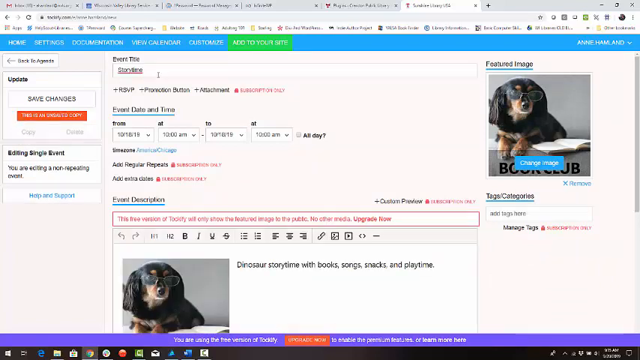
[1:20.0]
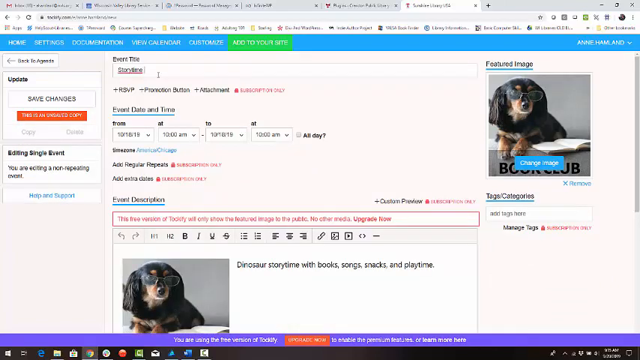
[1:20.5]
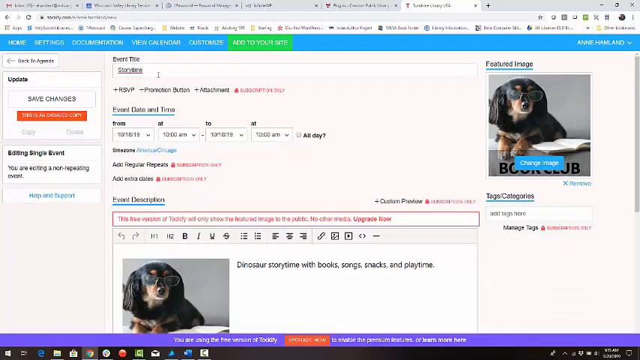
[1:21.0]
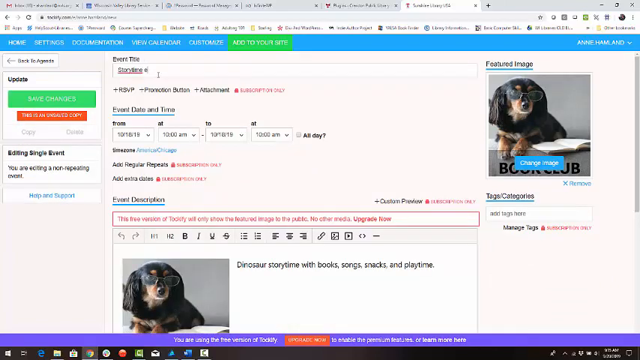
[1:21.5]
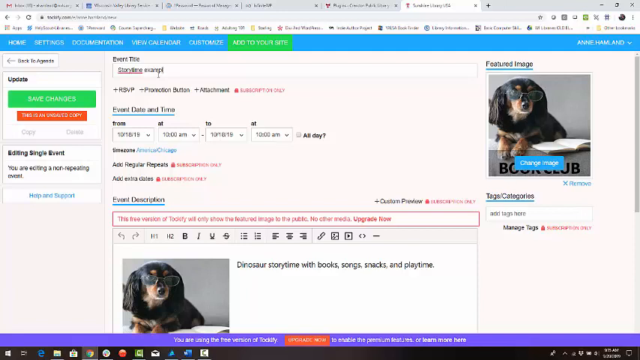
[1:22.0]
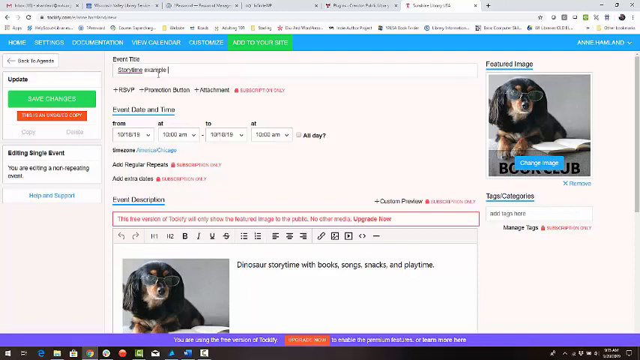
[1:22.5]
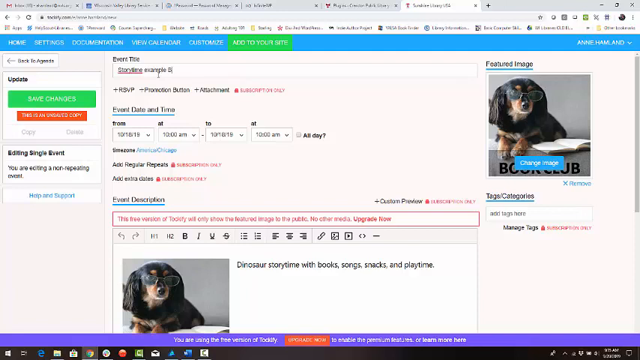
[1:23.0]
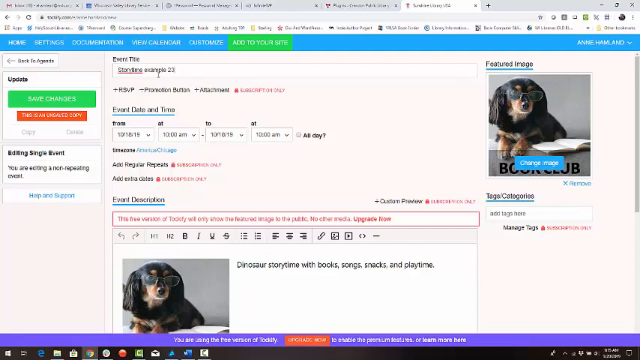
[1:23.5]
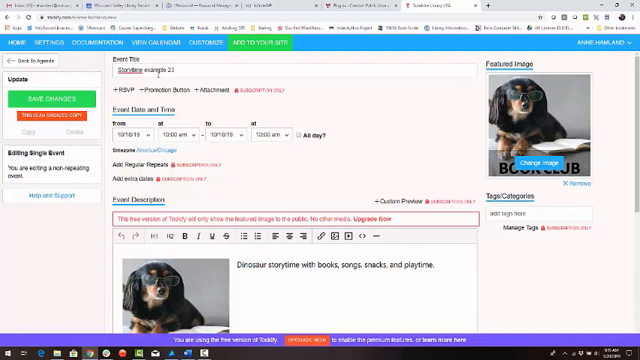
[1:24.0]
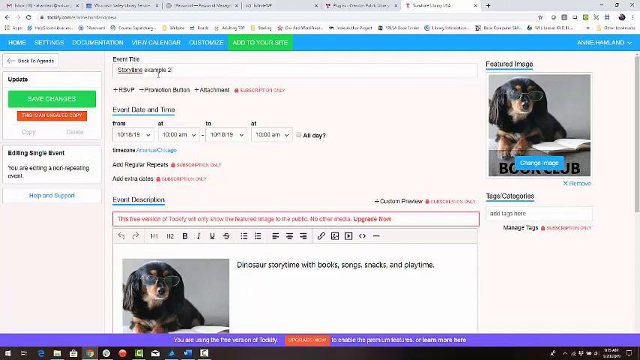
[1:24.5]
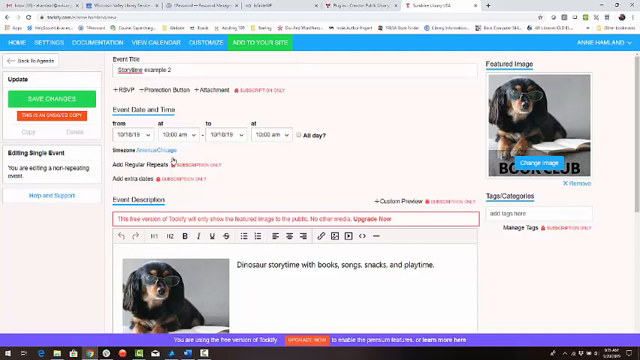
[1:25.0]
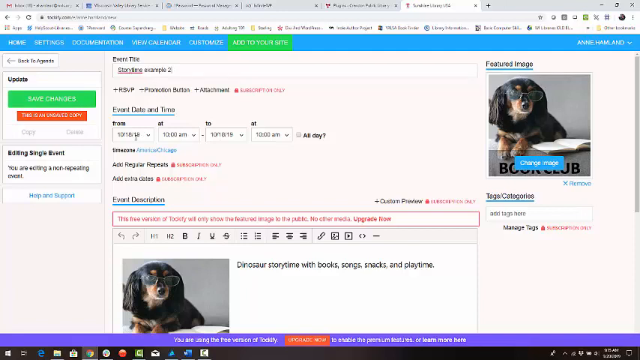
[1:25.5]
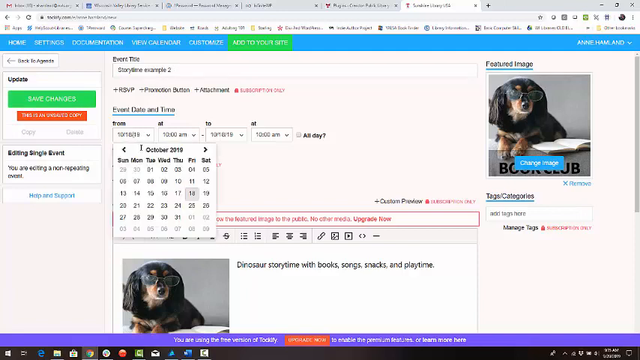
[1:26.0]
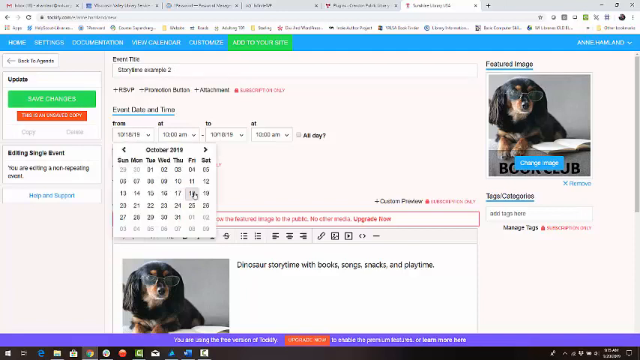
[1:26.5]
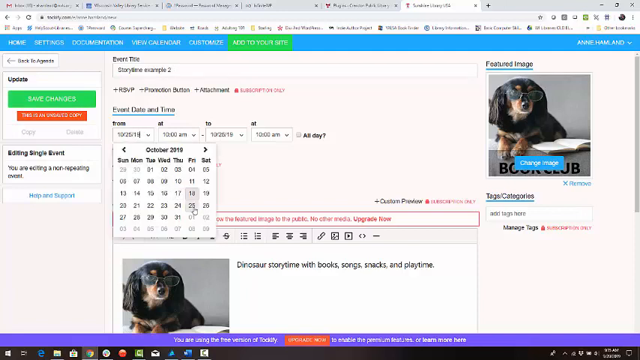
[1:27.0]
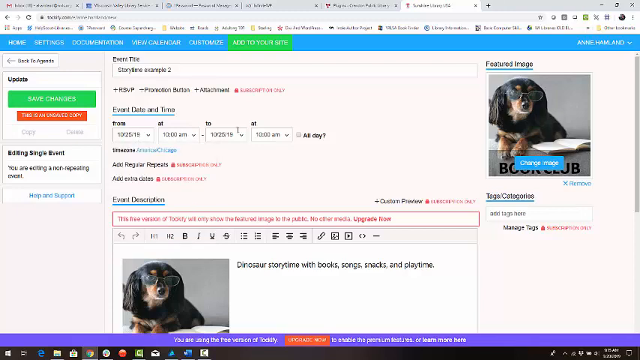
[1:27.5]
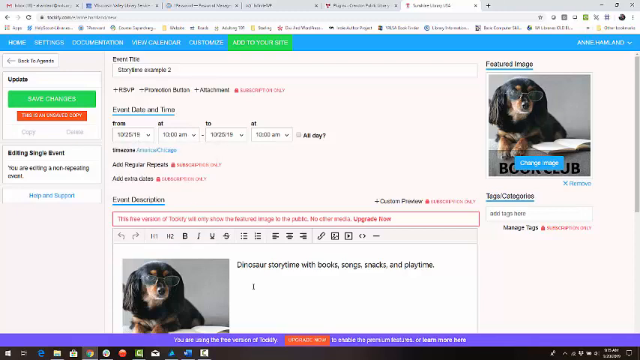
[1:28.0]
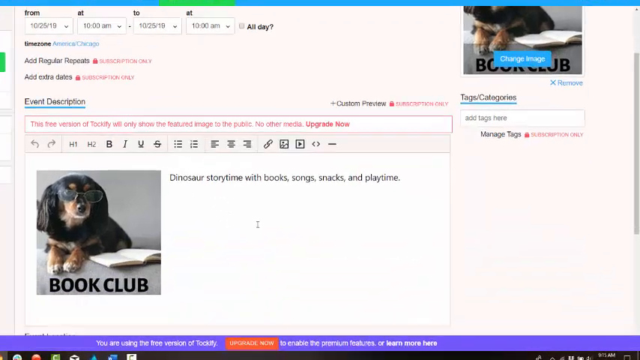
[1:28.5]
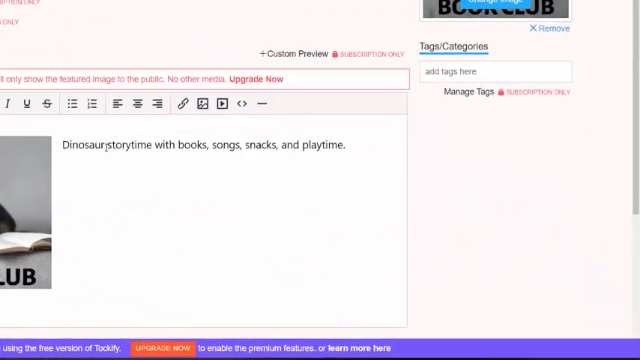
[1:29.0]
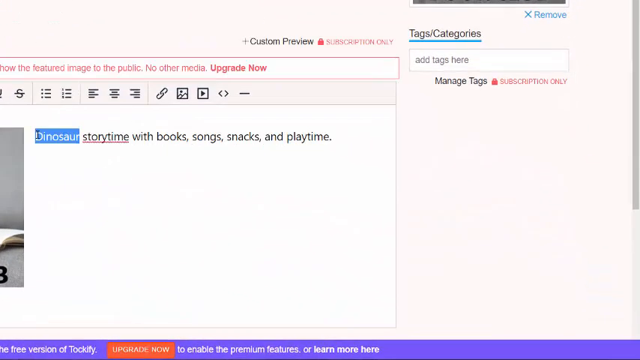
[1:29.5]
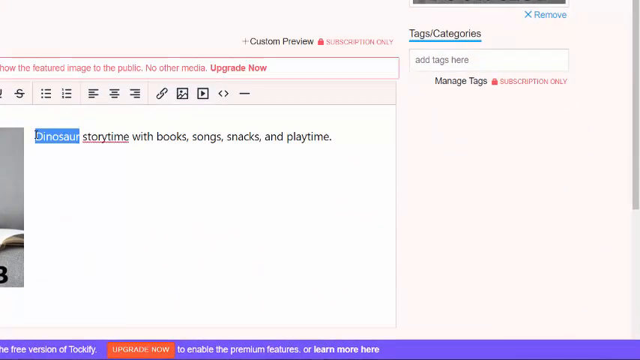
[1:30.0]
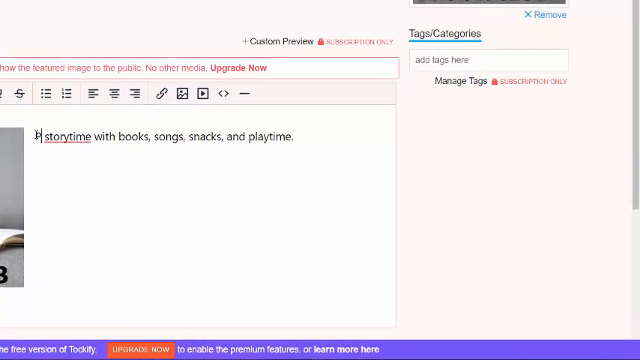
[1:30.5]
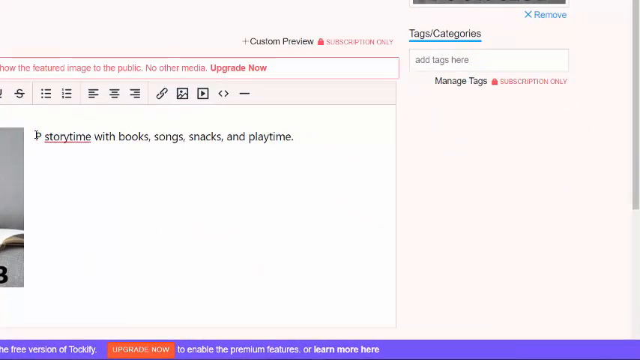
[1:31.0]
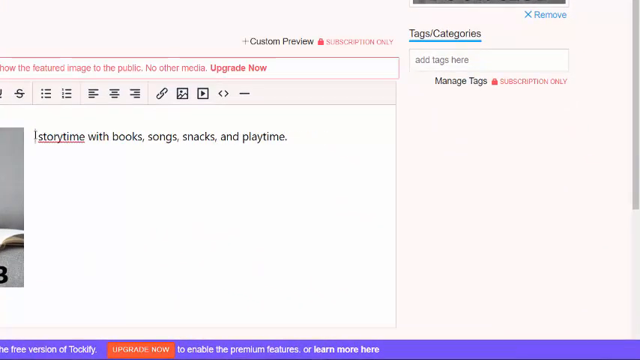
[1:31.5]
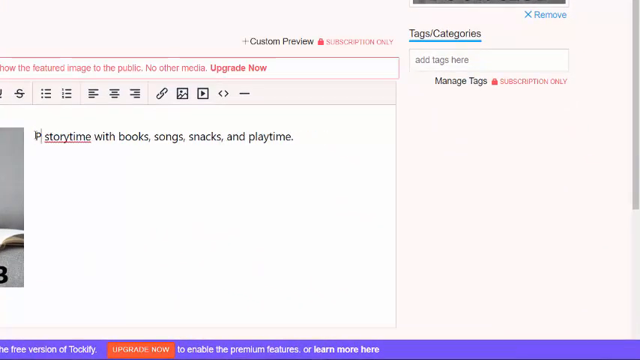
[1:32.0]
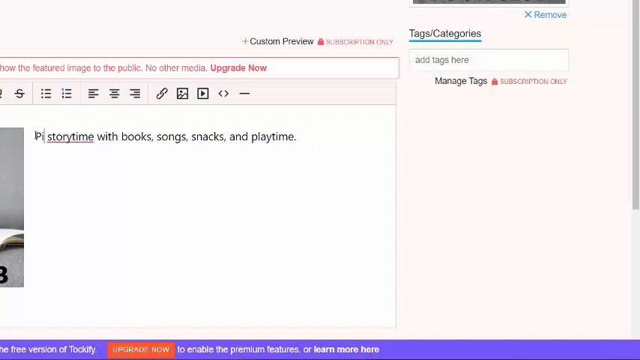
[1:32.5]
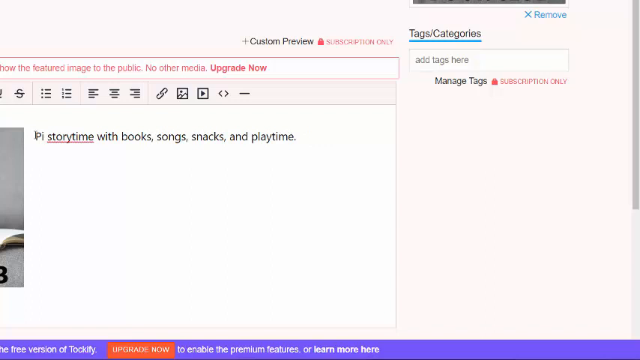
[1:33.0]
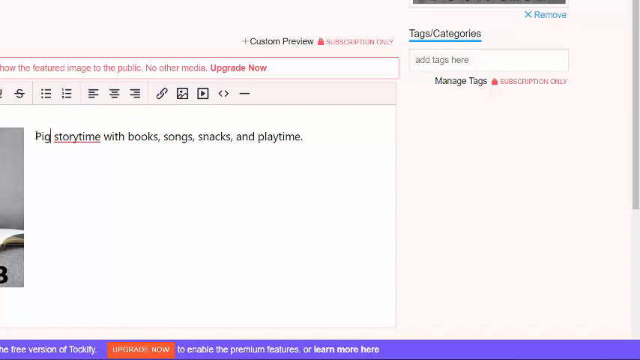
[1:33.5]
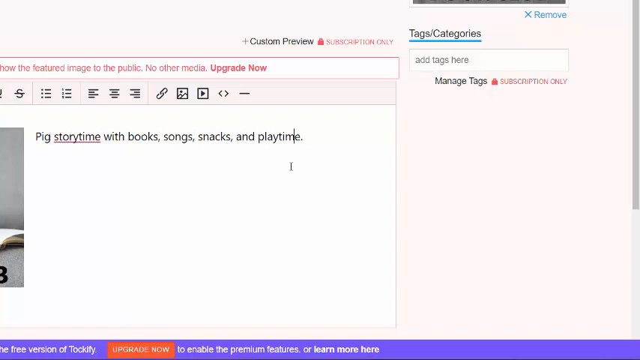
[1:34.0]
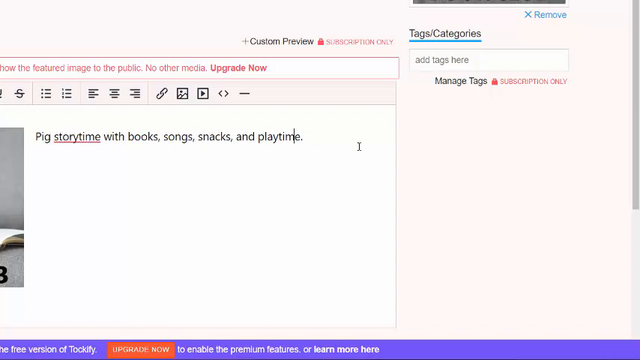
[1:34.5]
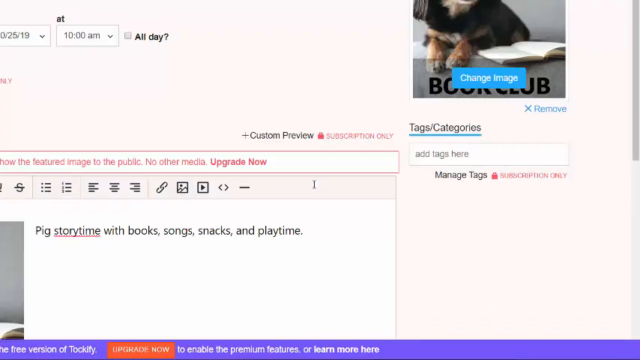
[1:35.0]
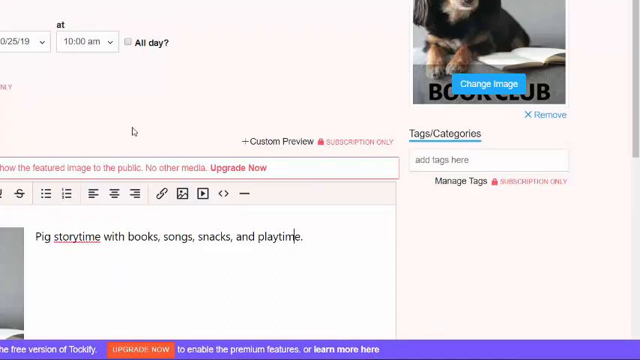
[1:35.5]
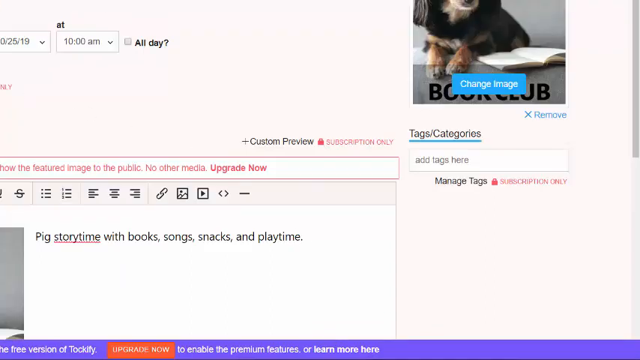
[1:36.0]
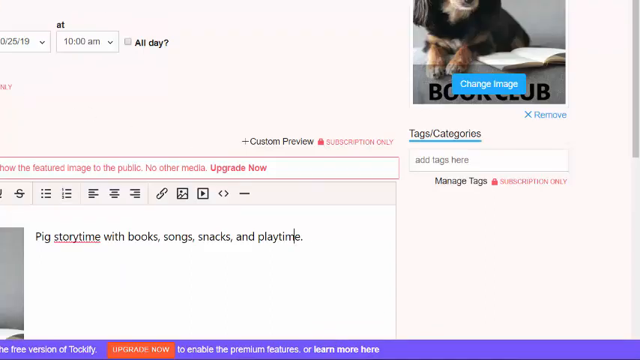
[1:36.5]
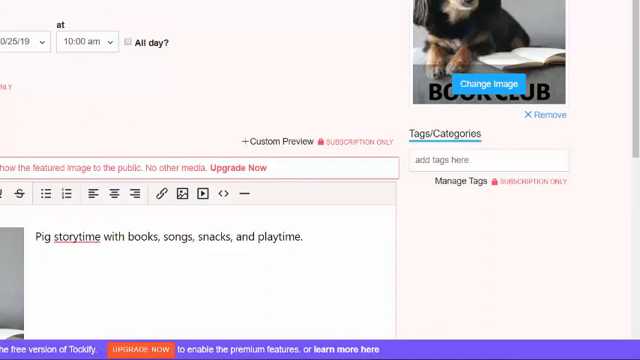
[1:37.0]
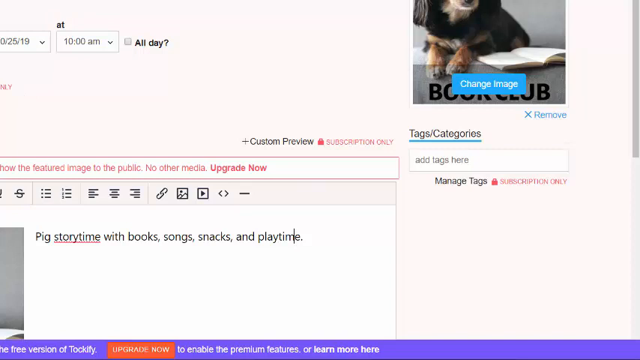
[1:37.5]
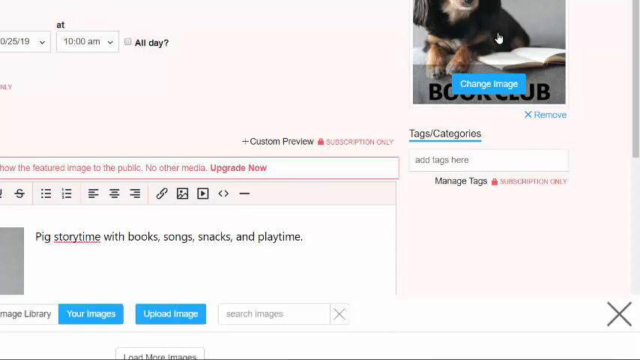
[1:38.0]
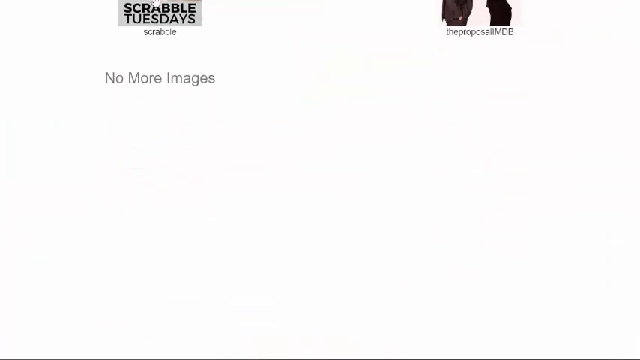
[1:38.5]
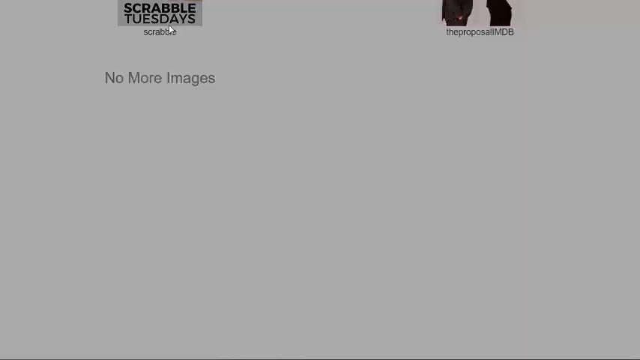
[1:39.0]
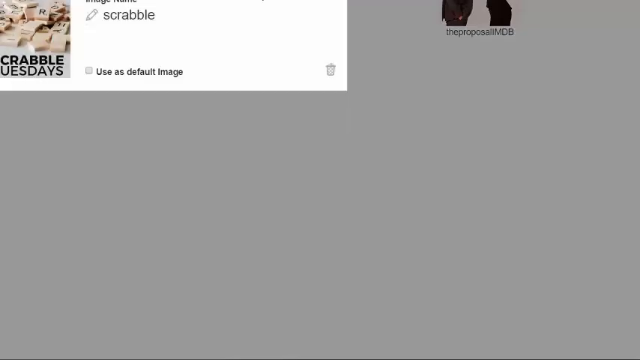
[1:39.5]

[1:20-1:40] A website with a word processor also has an input box in which the user is typing in black text. They click a pull-down menu showing an October calendar and seem to select a date. The camera zooms in on the word processor, showing black text that reads "dinosaur story time with books songs snacks and play time." The user seems to highlight the word "dinosaur," deletes it, and starts typing the word "pig." They scroll up to an image of a dog, which they seem to click, and the site navigates to another page. The page looks zoomed in, and only a partial image is visible.